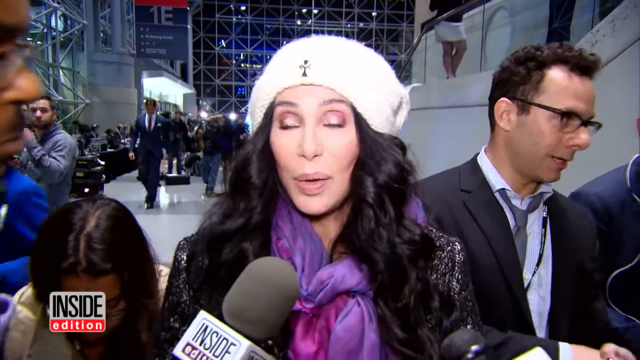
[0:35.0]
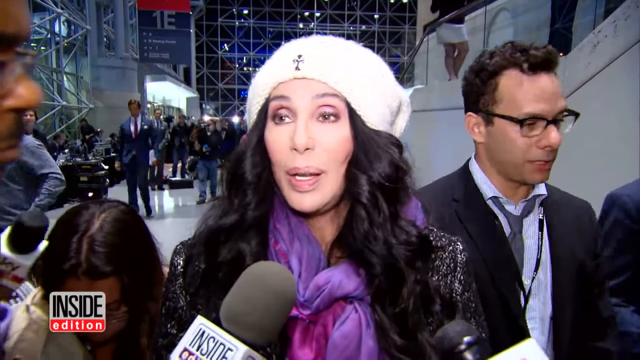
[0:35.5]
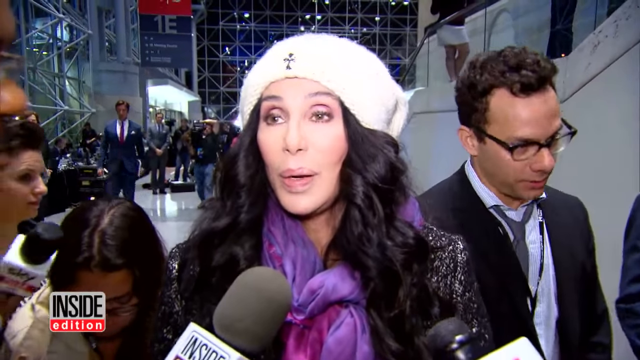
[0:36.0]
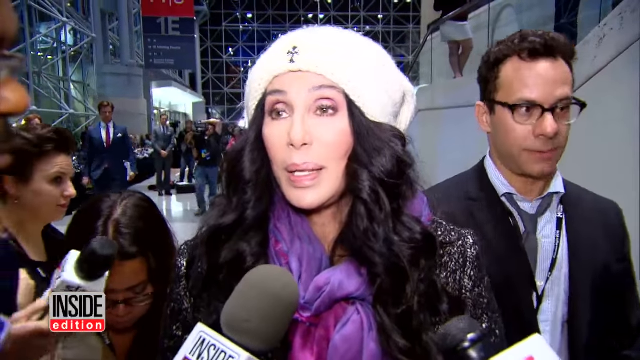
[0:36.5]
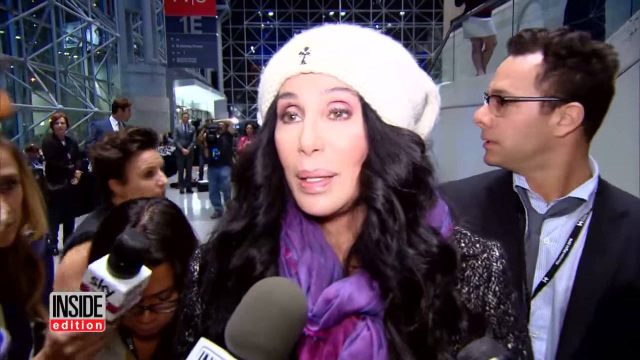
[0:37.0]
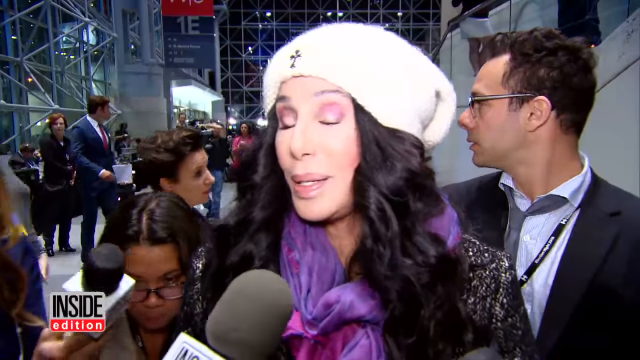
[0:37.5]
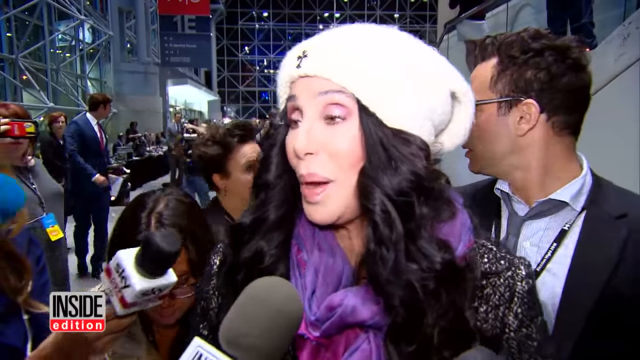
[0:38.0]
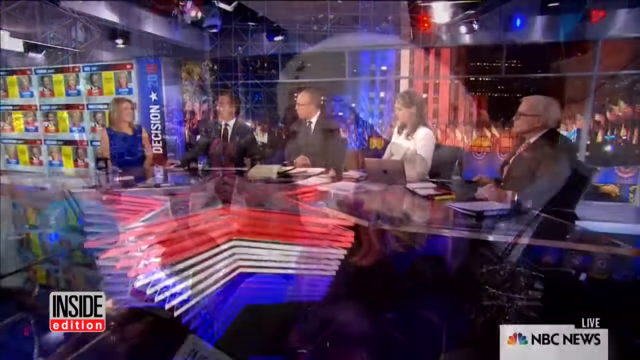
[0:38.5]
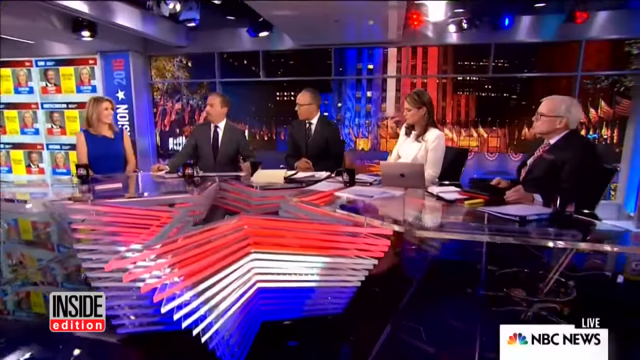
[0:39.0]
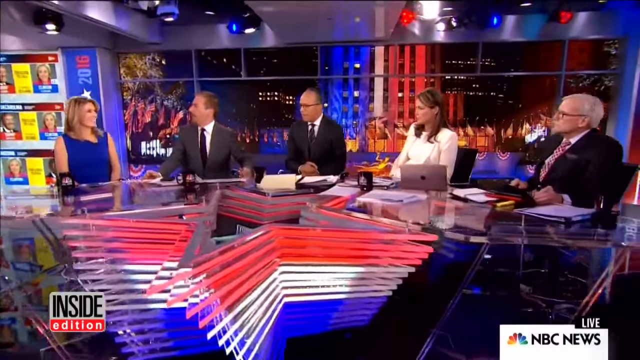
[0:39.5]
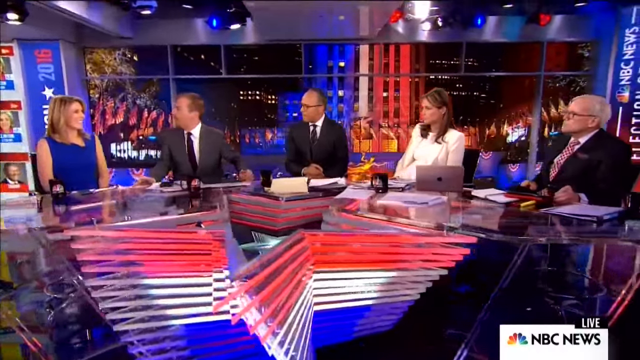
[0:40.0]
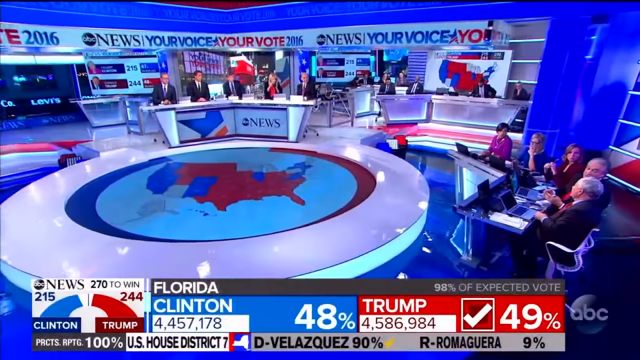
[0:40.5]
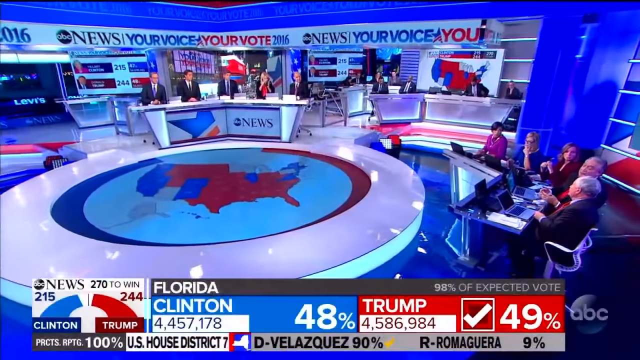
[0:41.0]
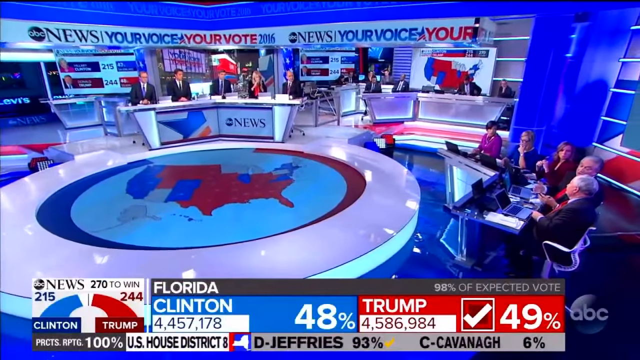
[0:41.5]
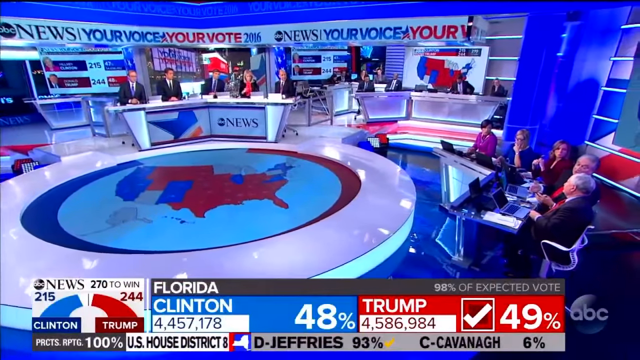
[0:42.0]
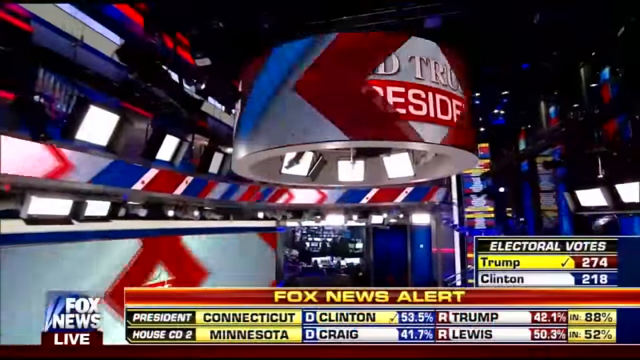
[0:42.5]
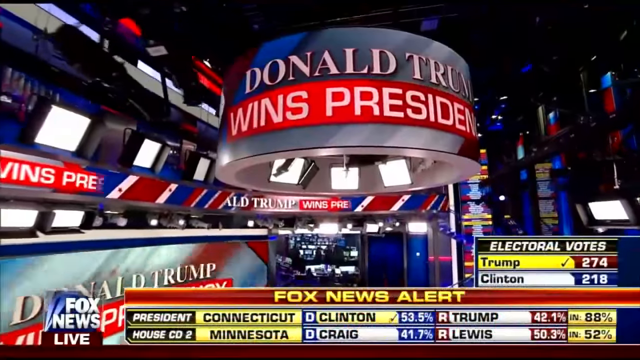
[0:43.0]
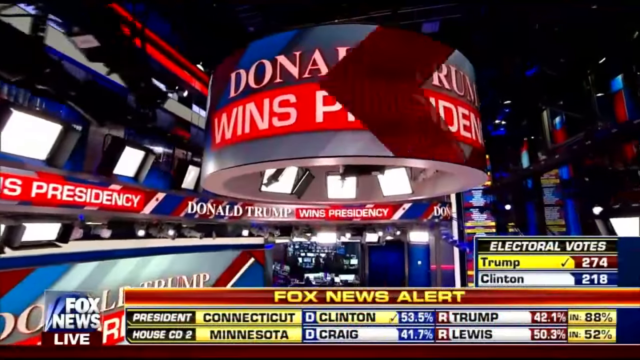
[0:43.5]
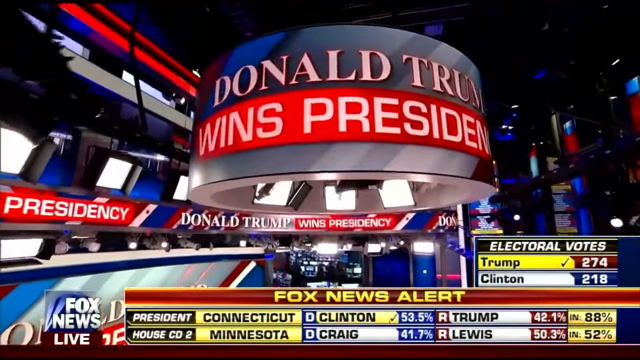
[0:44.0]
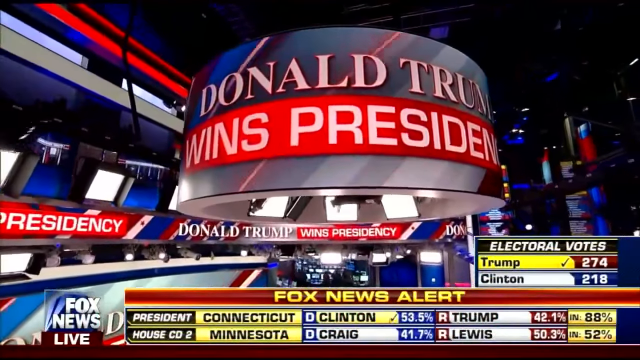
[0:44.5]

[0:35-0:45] Cher's interview in front of the microphone continues for a few seconds. The video then shifts to a newsroom with a lot of lights, showing footage of U.S. presidential election day. Big graphics read "Donald Trump wins presidency," and an electoral vote count in the bottom right shows Trump 274, Clinton 218, from the election in which he beat Hillary Clinton. There is a big glass desk with a star graphic on it, and about five people, the anchors, hover around the desk, each with their own papers and laptop in front of them. The Inside Edition logo remains in the bottom left.